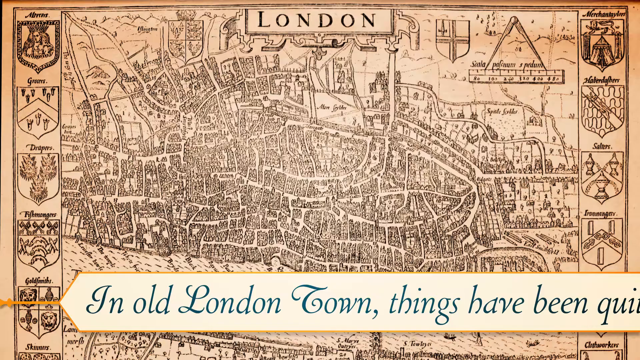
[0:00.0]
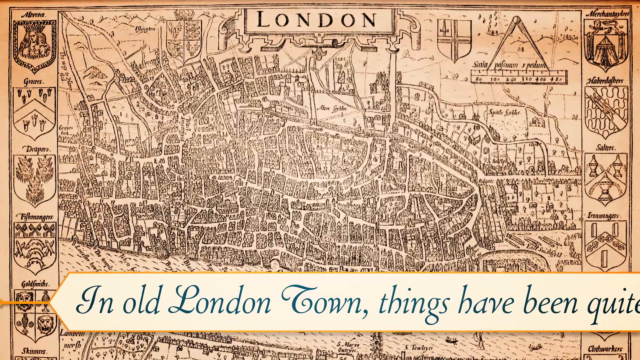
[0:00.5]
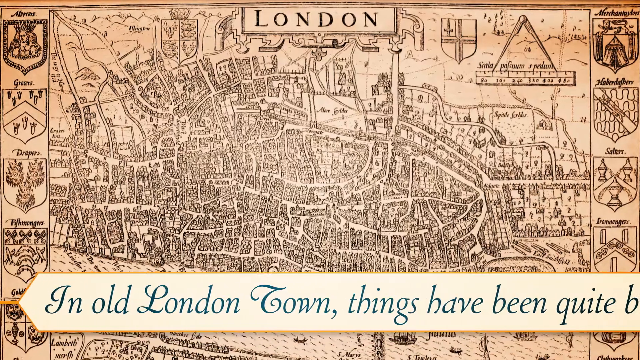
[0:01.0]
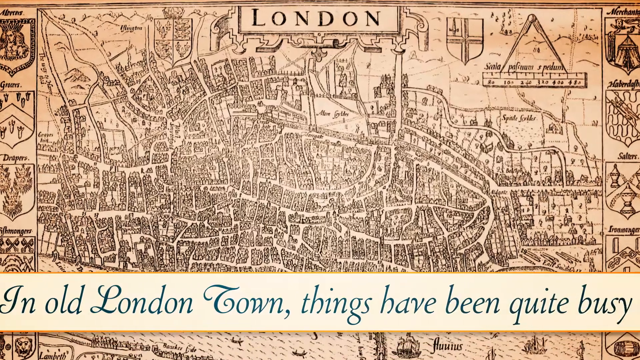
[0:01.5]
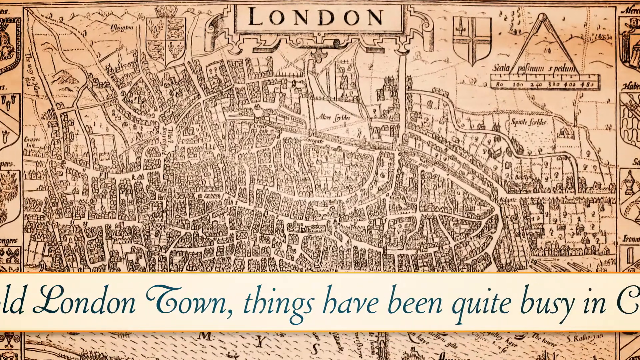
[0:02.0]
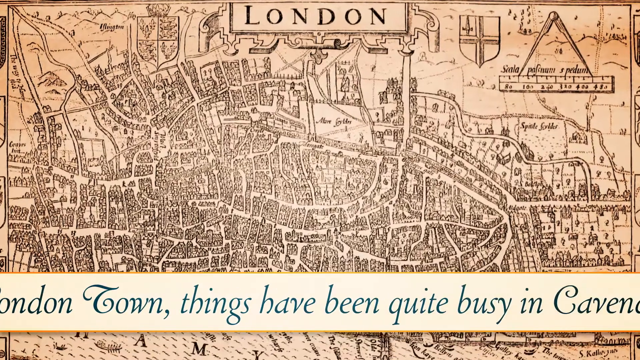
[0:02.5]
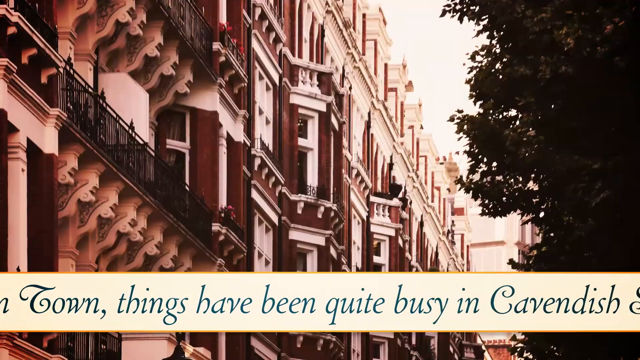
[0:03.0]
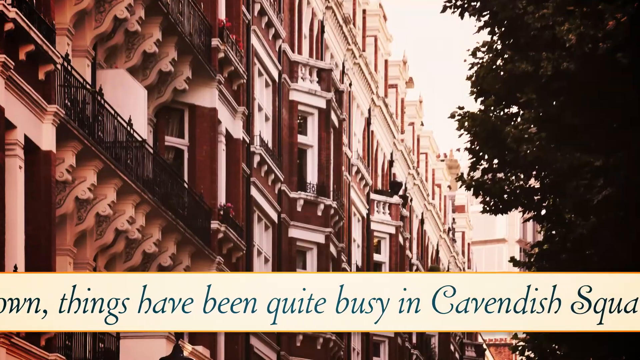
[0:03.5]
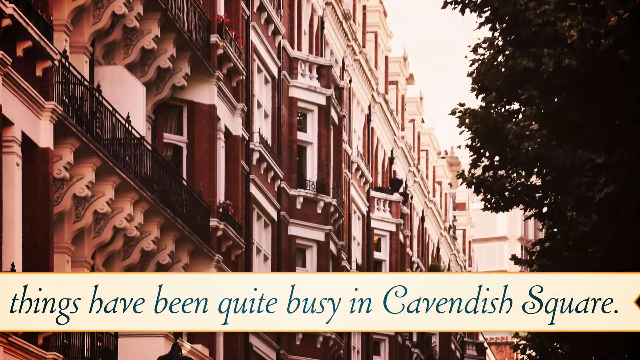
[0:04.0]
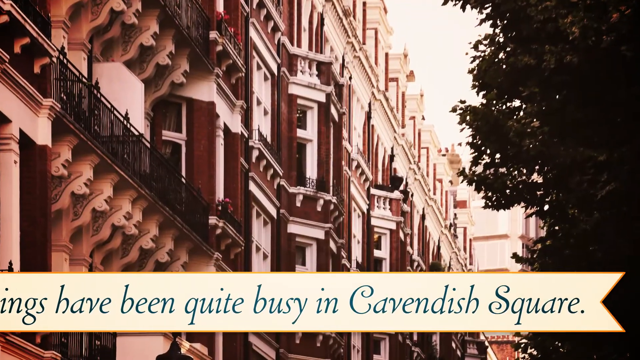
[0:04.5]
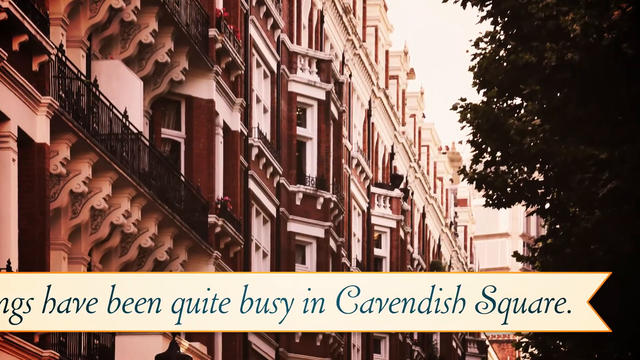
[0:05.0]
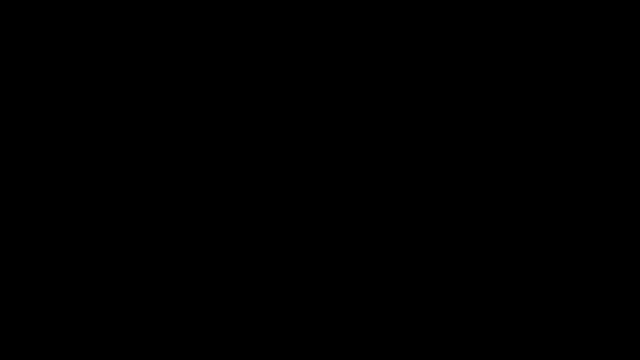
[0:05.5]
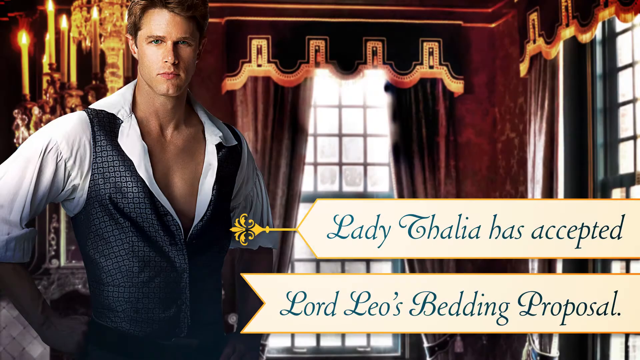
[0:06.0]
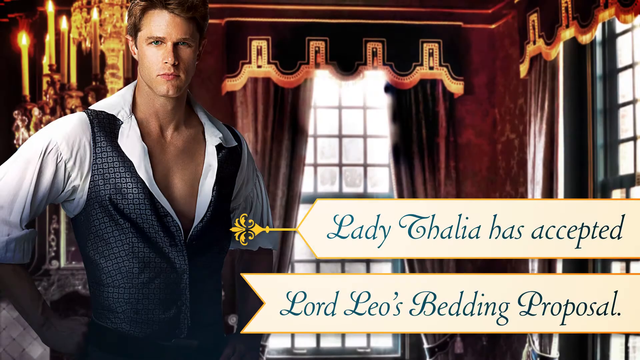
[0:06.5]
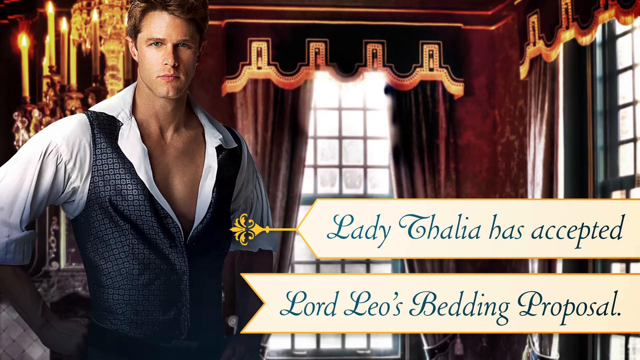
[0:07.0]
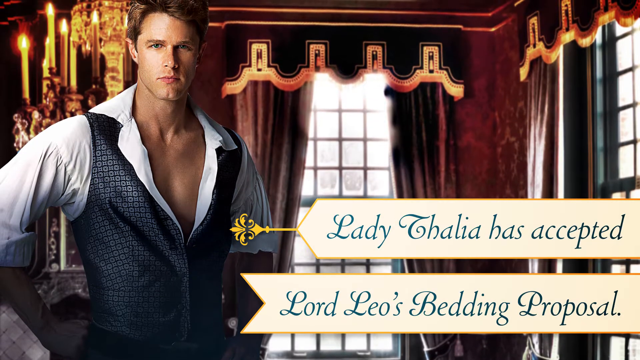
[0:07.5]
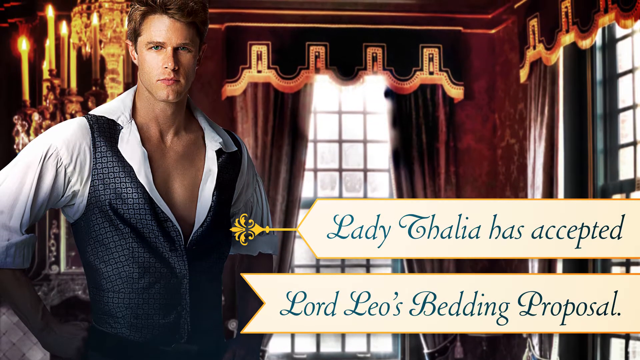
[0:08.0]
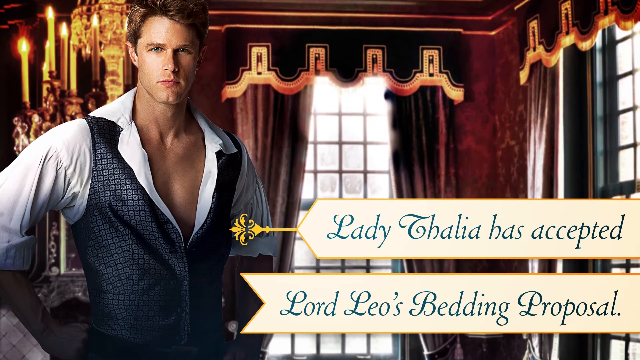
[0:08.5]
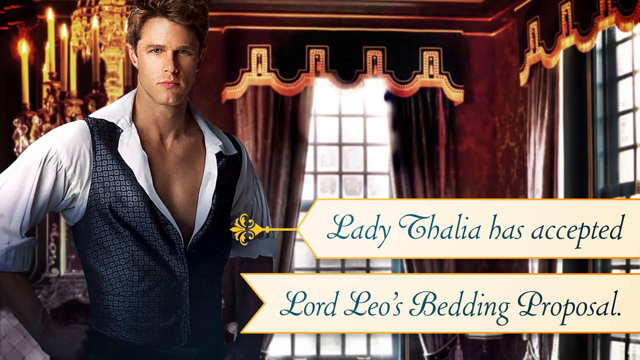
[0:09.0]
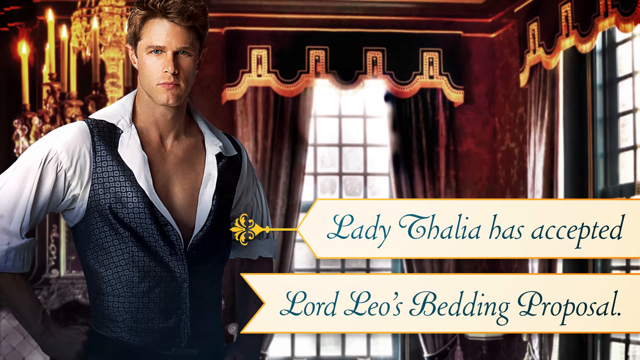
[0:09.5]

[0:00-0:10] An old town map of London appears, followed by a montage of different graphics, including a picture of a building and a picture of a man. Text reads "In old London town, things have been quite busy in Cavendish Square. Lady Thaler has accepted Lord Leo's bedding proposal." The sequence seems to establish the location, moving into the square and then to an individual. Lord Leo, a handsome man, is inside an olden-style house. He wears somewhat olden-style clothes: a plunging, open button shirt and a vest. He has light brown hair and is quite tanned, and he looks seductively at the viewer.